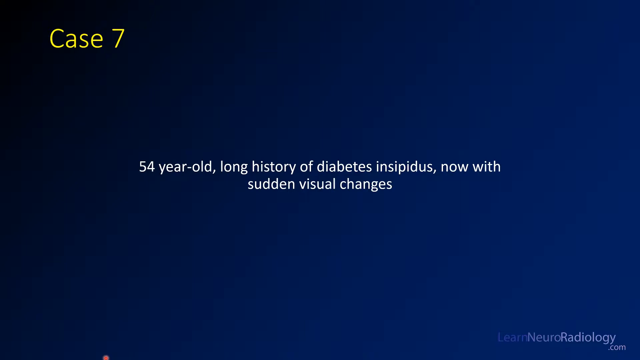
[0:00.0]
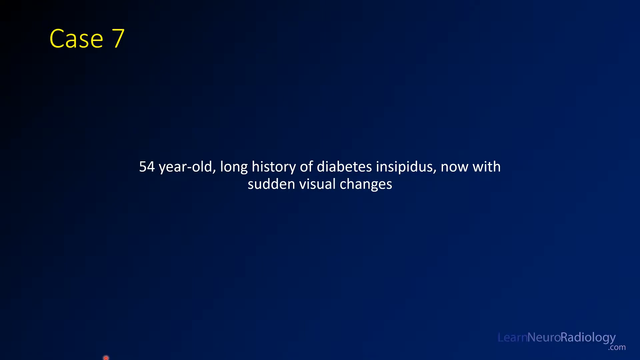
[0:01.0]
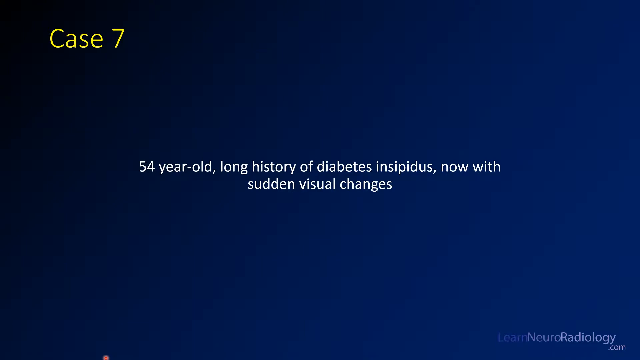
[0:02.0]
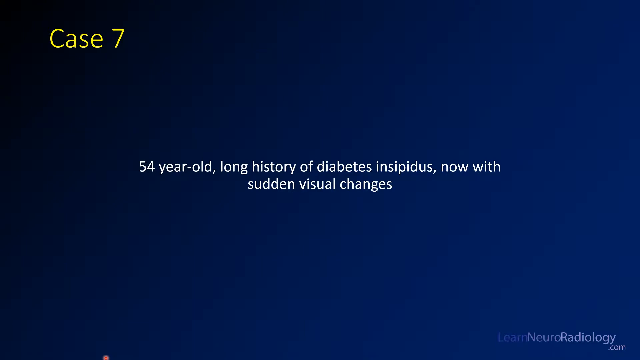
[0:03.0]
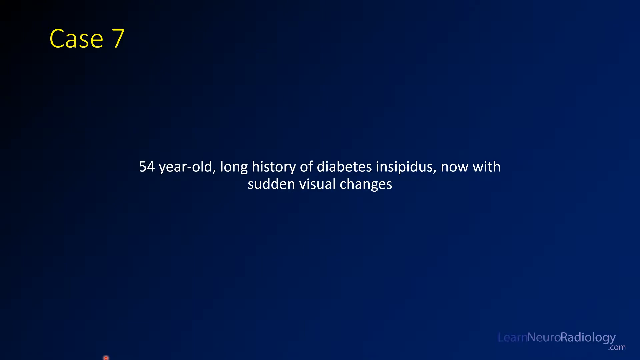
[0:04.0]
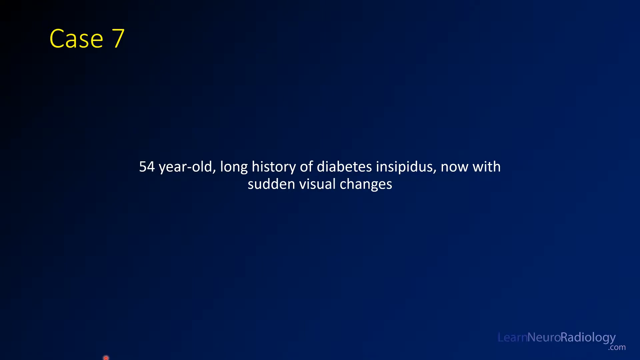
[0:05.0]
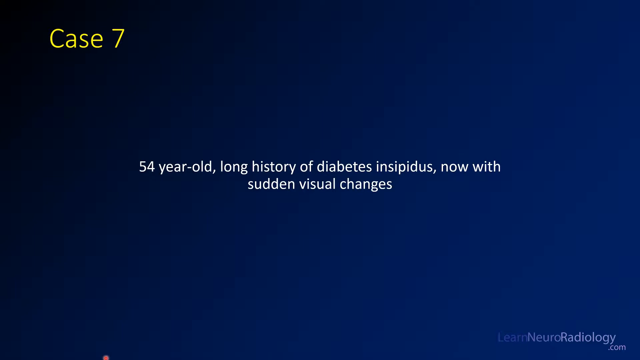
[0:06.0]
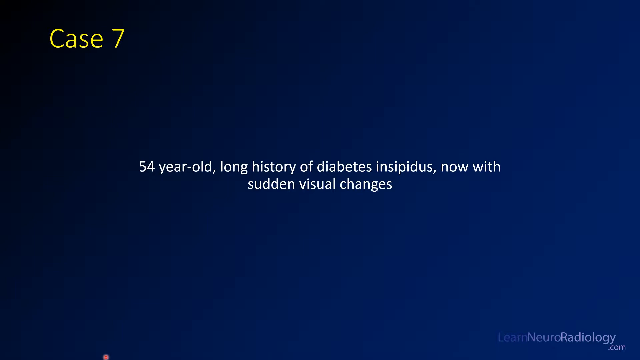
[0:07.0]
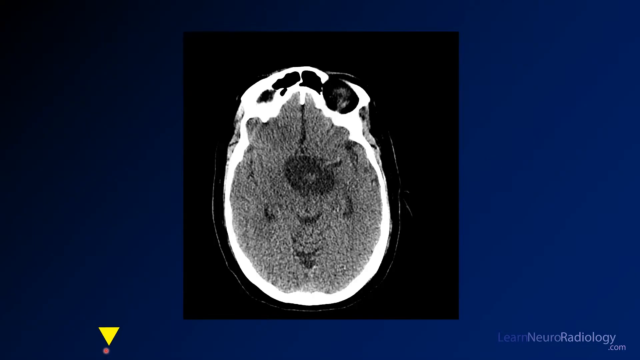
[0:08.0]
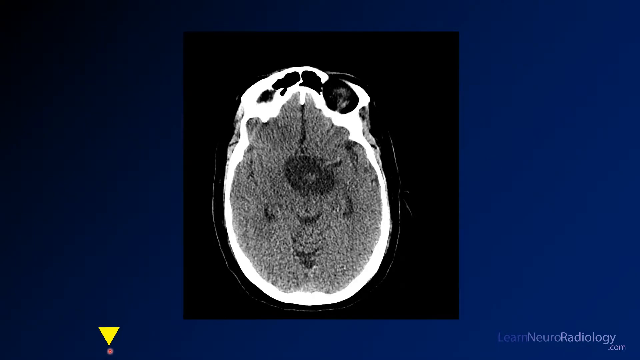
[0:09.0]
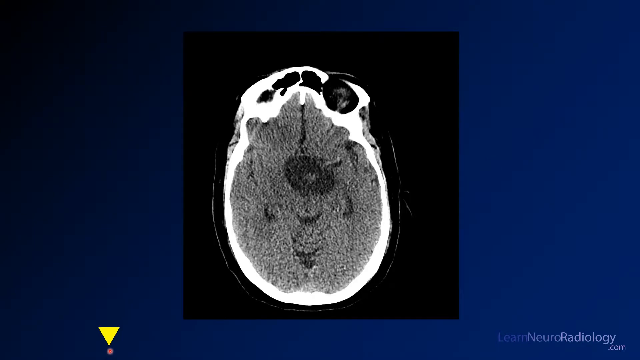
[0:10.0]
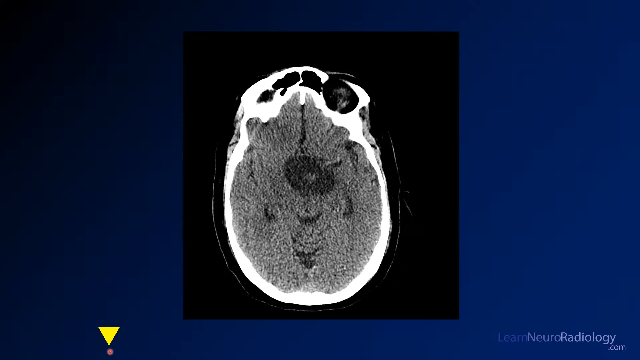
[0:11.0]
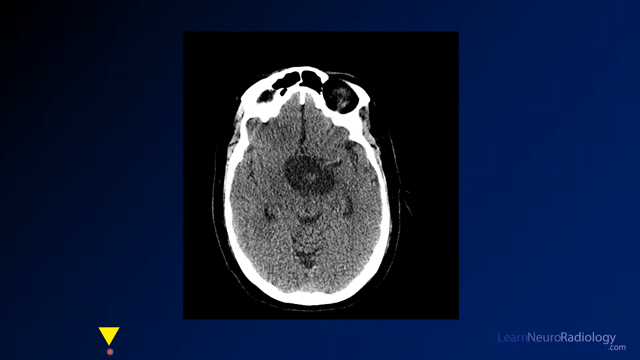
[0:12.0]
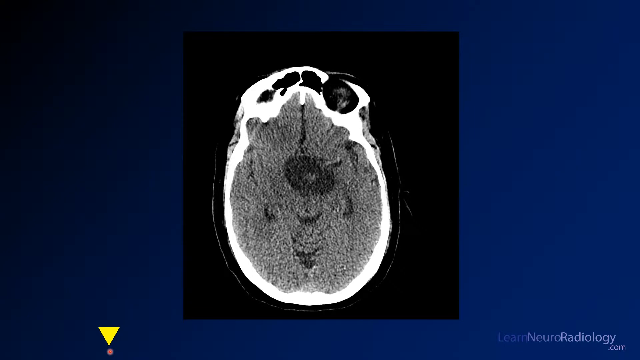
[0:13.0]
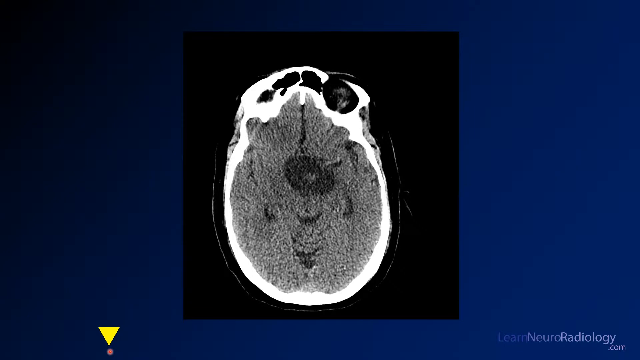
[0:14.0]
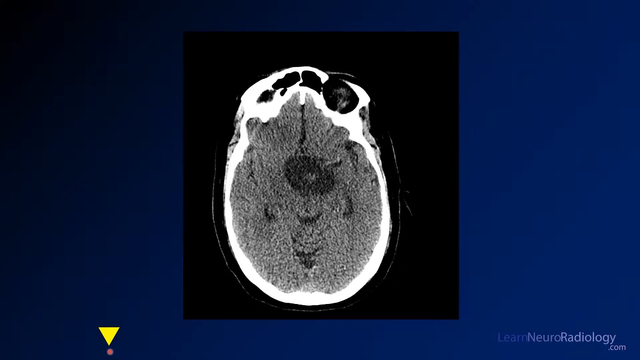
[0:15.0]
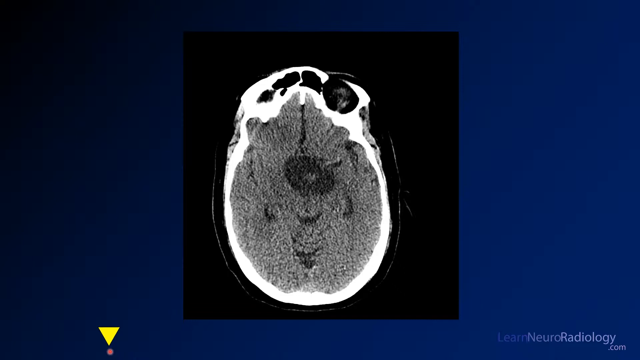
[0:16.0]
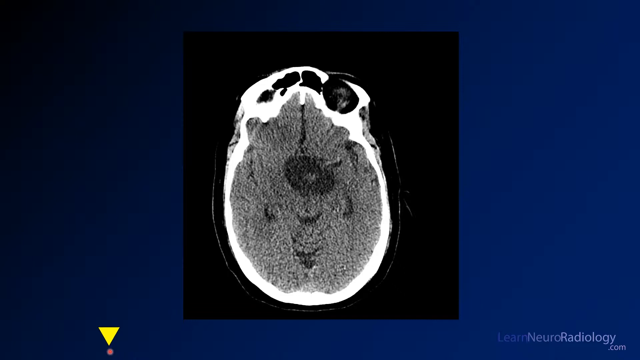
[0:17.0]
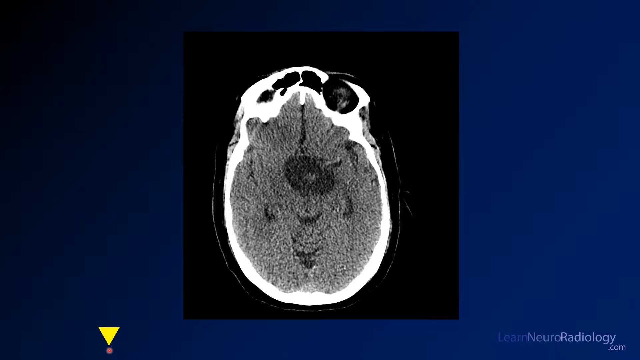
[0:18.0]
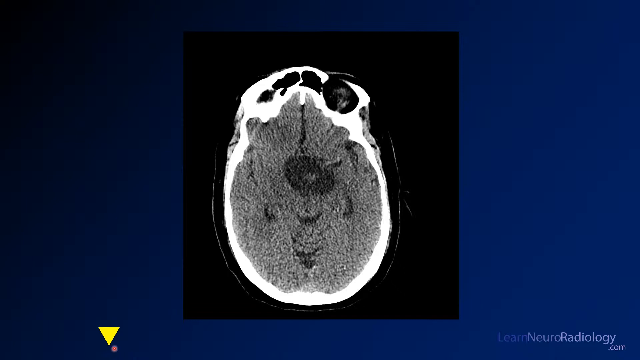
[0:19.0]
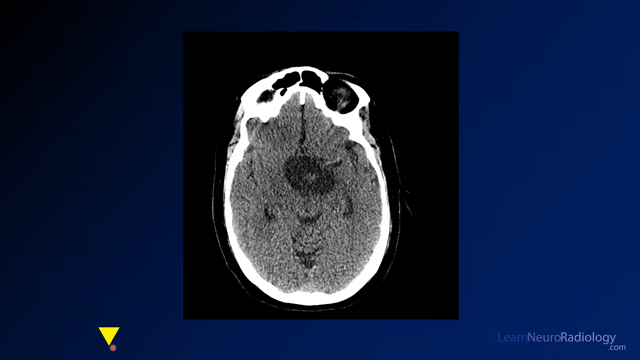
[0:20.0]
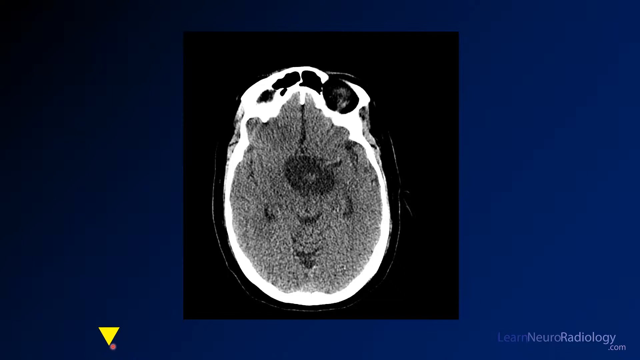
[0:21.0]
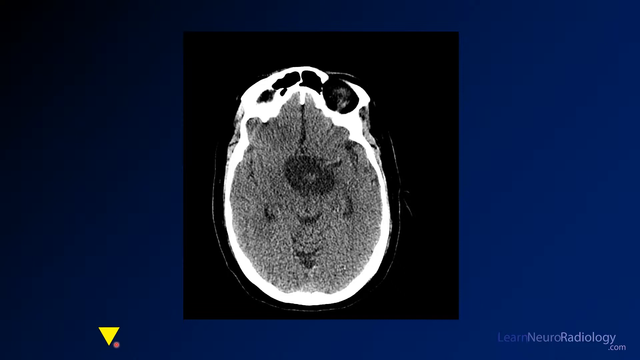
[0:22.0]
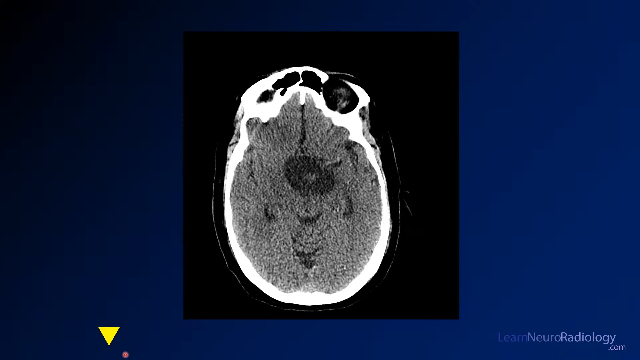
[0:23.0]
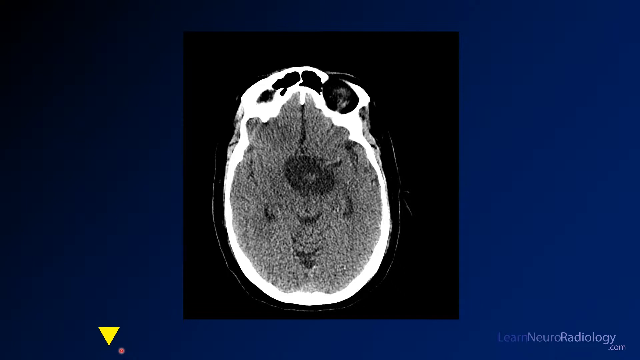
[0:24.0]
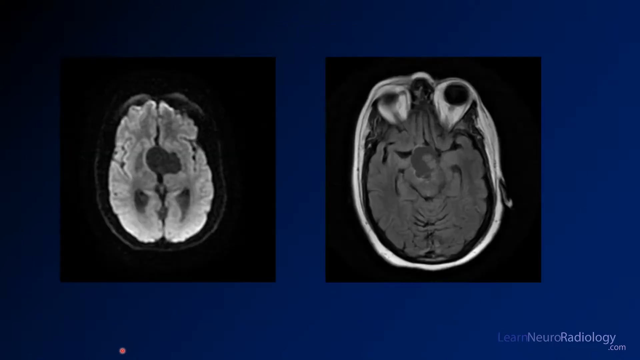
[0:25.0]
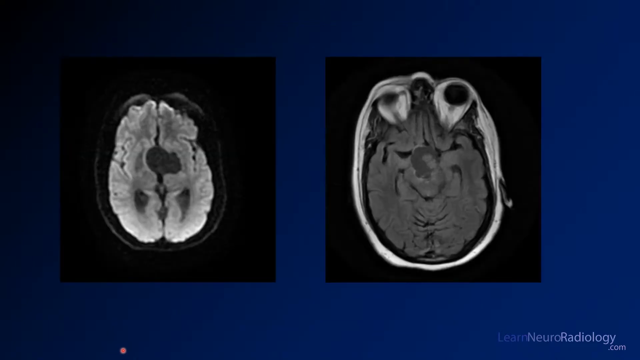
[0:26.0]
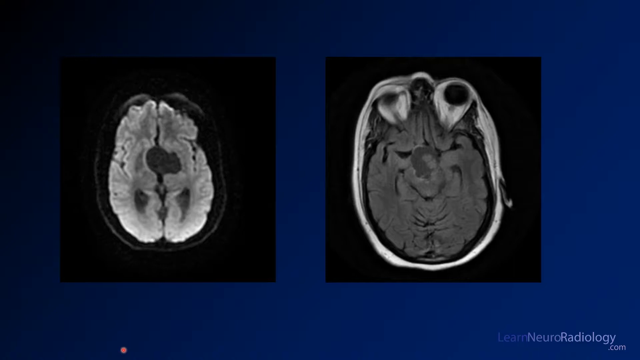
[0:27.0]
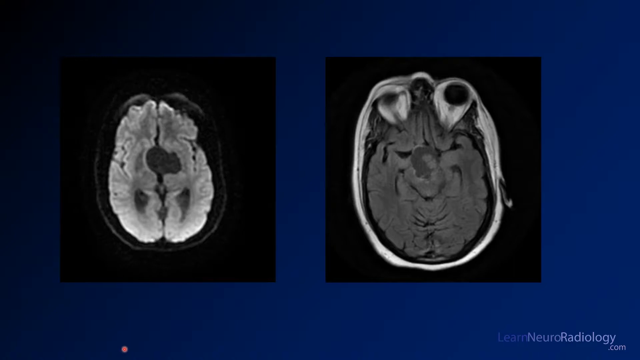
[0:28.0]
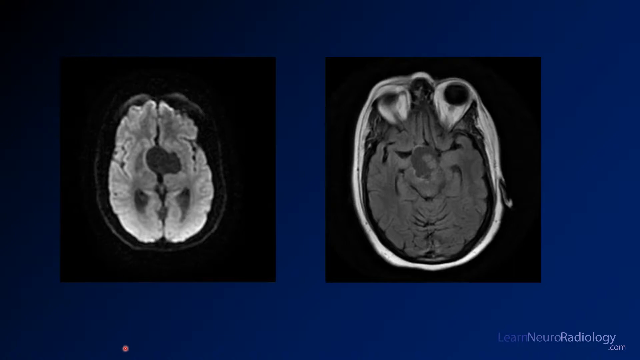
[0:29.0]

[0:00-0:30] The video opens on a plain navy blue screen with small white lettering in the middle reading "54-year-old, long history of diabetes insipidus, now with sudden visual changes." At the top, larger yellow text reads "case seven." Next comes what looks to be a scan of the brain: on the same blue background, a hospital-style scan image, maybe an MRI or CT, appears in the middle on a black background. It apparently shows the brain or head, with a quite white ring around the outside, gray matter in the middle, and a darker area in the middle of that. Two images then appear side by side, apparently showing the brain again at slightly different angles and views.